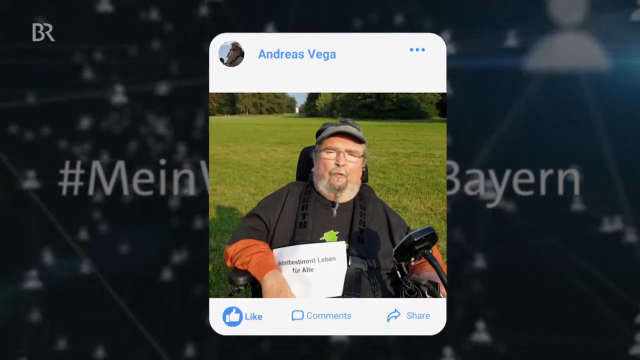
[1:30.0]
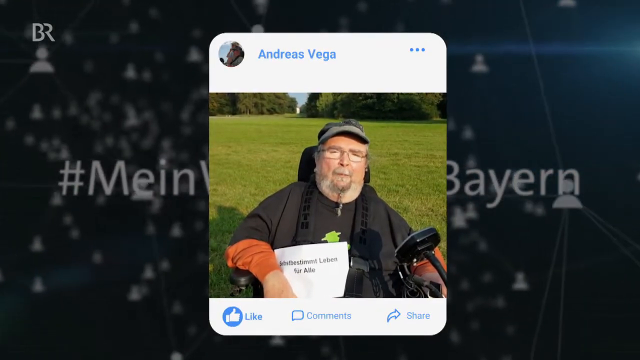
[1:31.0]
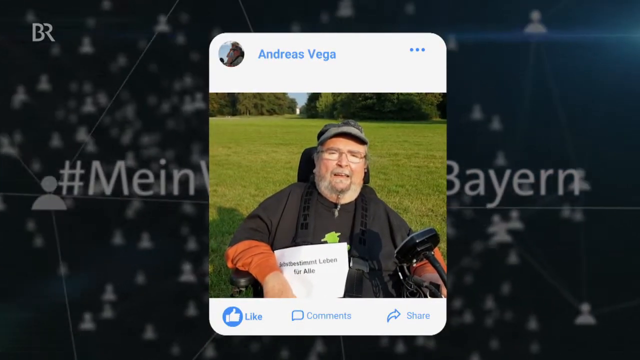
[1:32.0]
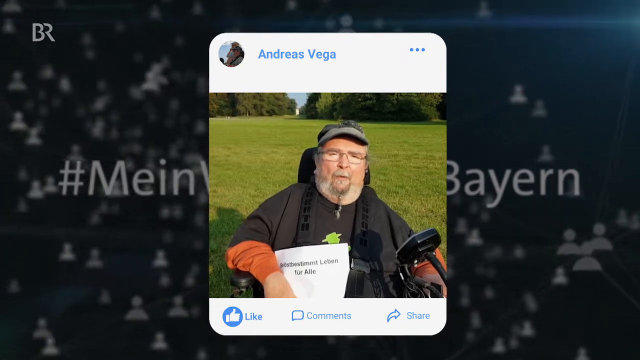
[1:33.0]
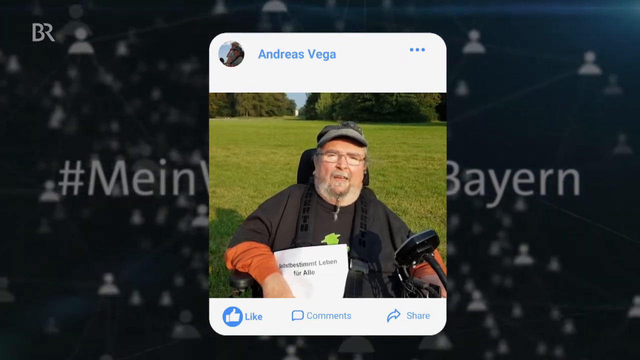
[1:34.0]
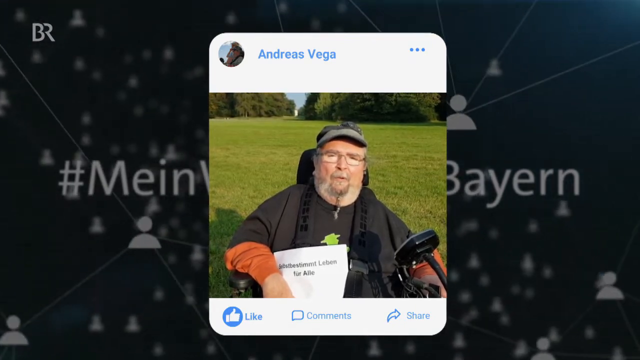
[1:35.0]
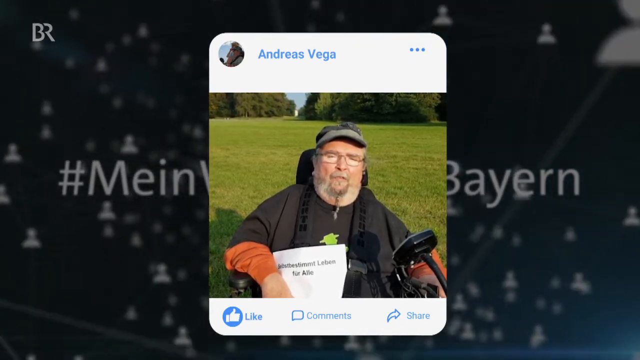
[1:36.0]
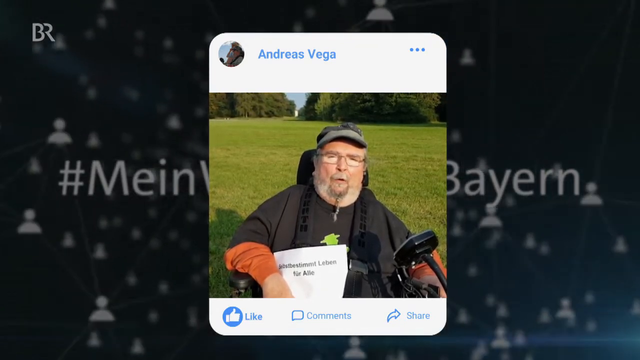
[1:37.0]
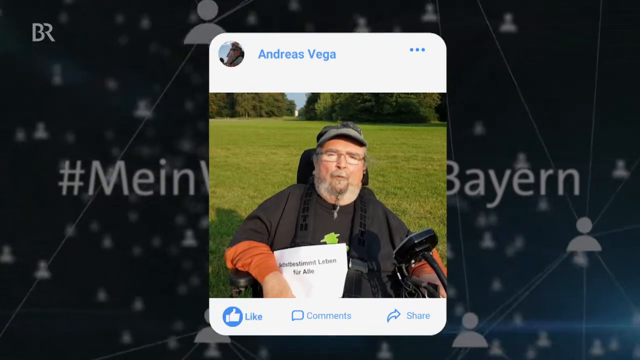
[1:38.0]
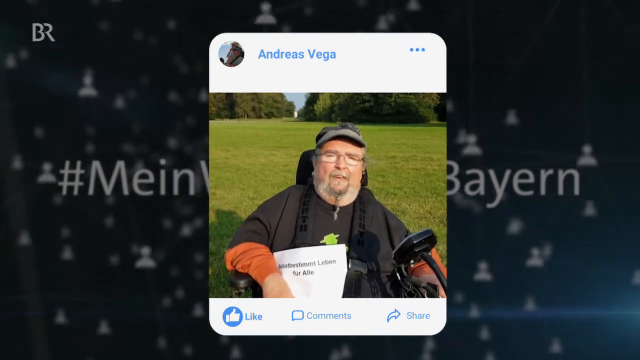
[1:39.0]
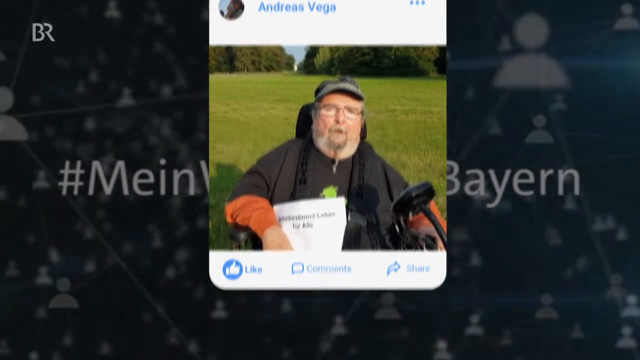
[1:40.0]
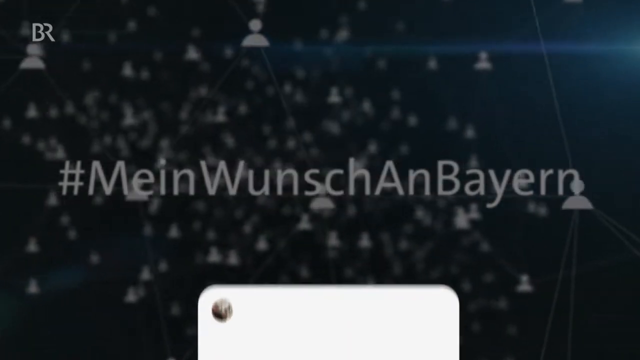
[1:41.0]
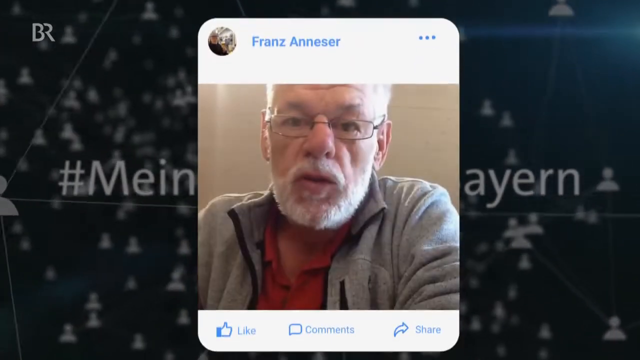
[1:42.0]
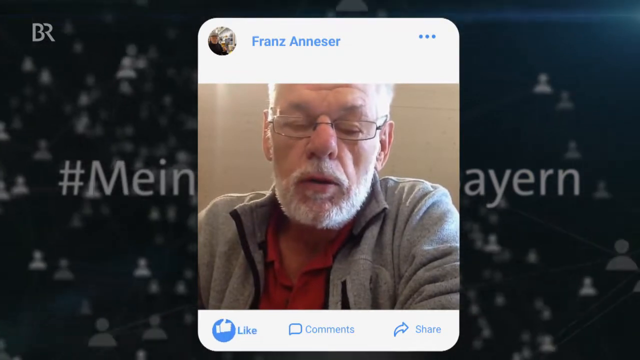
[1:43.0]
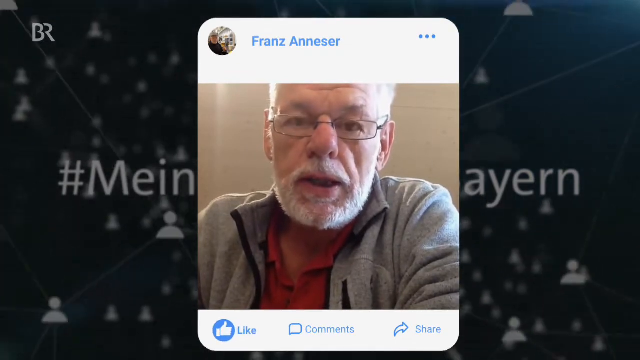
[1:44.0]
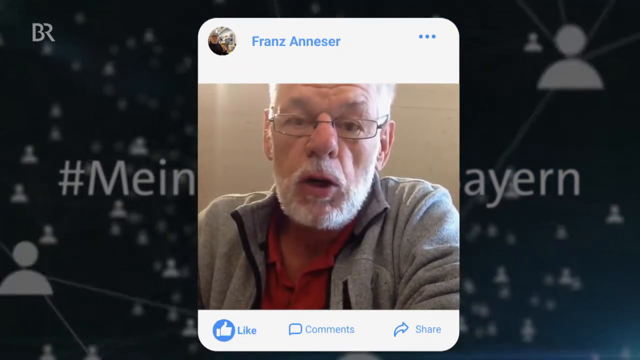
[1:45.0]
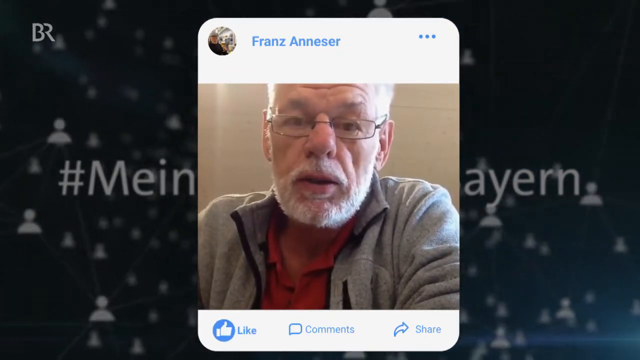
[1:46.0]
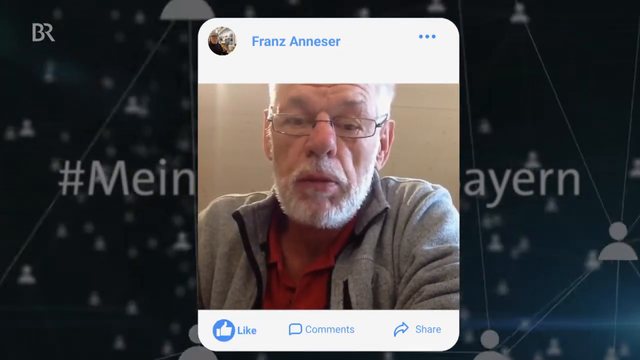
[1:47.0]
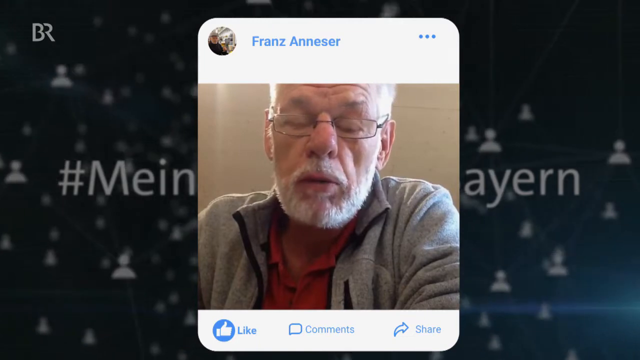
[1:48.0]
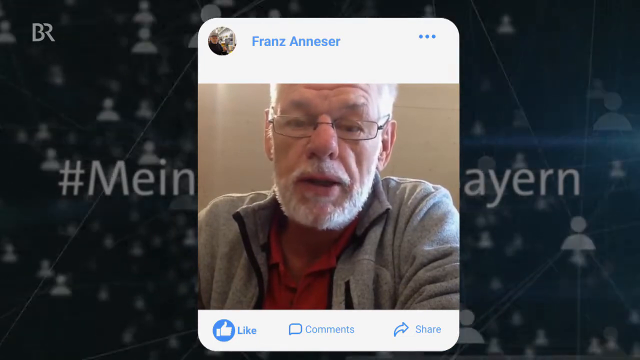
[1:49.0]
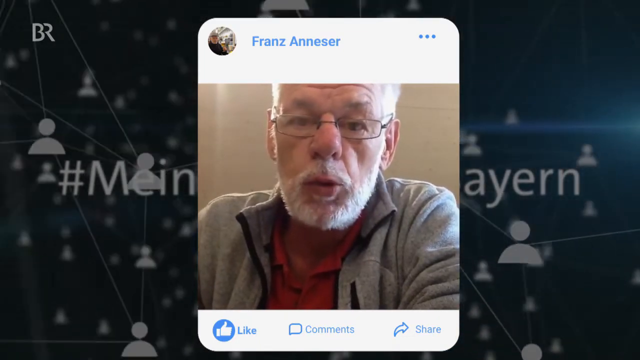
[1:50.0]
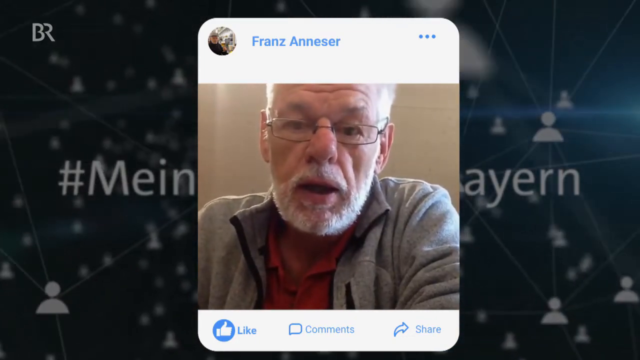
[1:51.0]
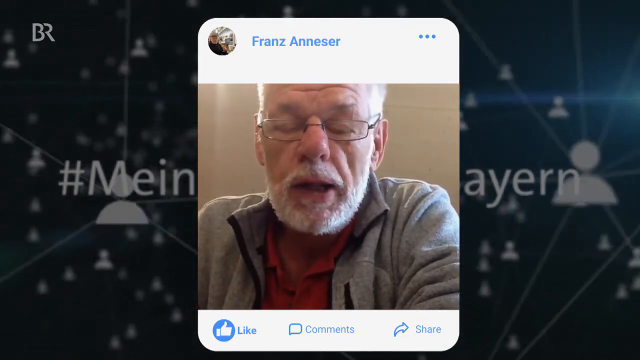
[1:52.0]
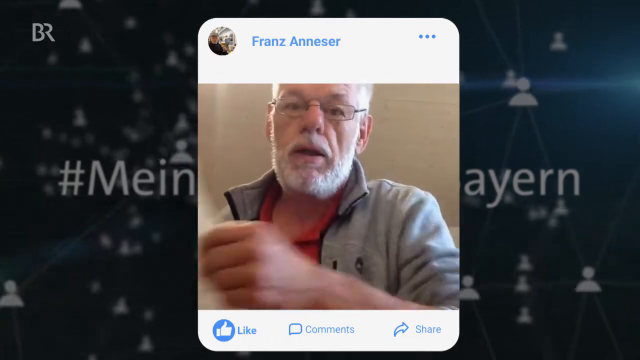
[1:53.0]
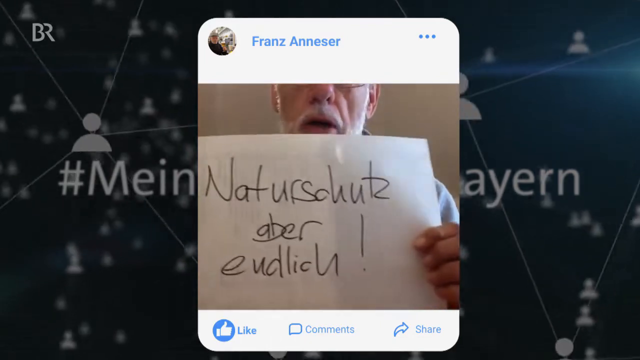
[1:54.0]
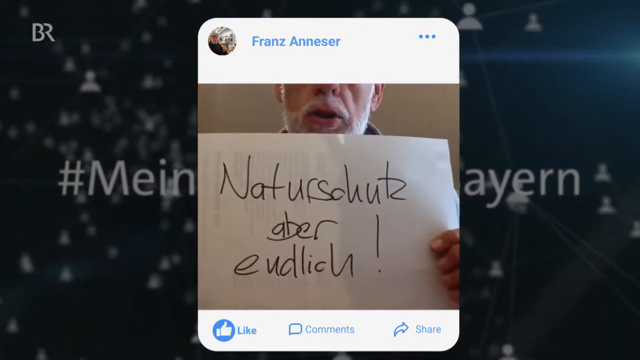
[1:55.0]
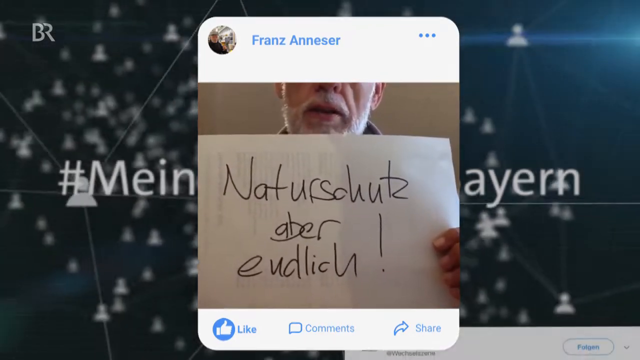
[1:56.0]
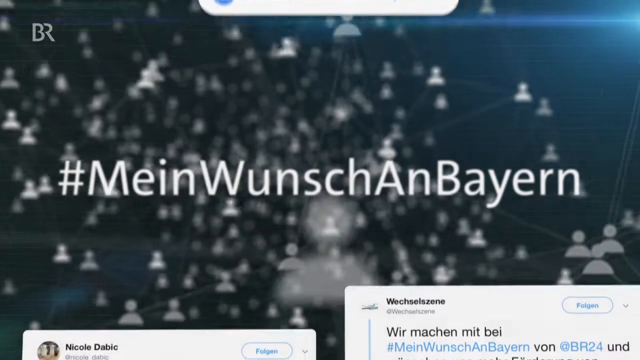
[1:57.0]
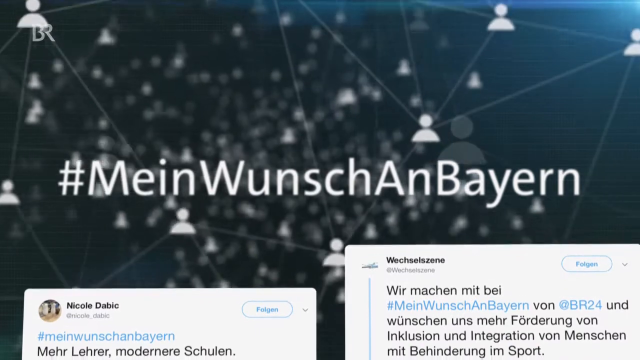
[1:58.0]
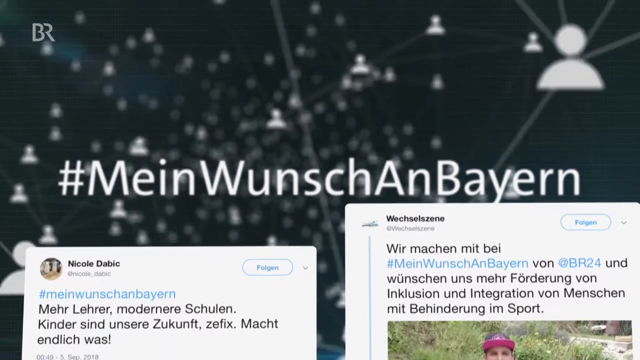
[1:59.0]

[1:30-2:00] A man who looks like he is in an electric wheelchair is shown with a tweet-like label reading Andreas Vega. He is in front of a screen that says "#Mein Wunsch an Bayern", with symbols of people connected by lines as though they have connections. He talks, and he has a peculiar beard braided into a little braid. Next, a man comes up from the bottom, named Franz Anesser. He talks without a sign, shown as though he is on Facebook. He then holds up a sign beginning "Naturschutz". More tweets come up.